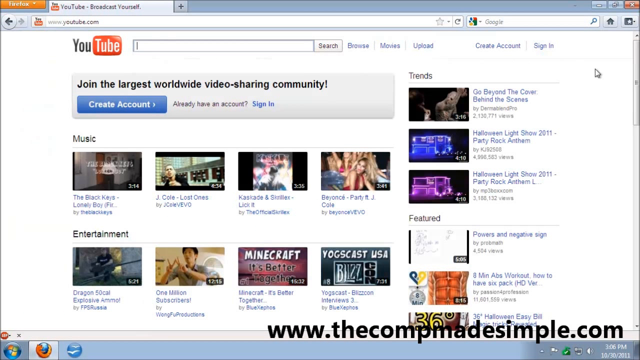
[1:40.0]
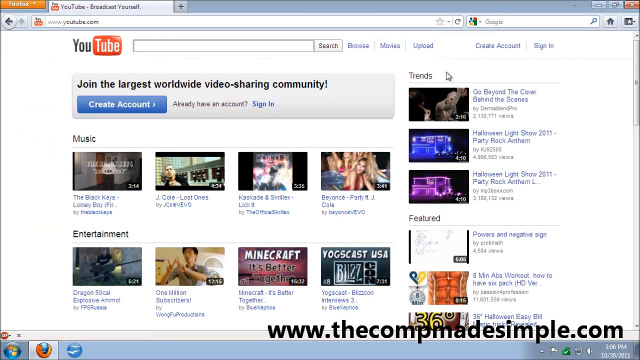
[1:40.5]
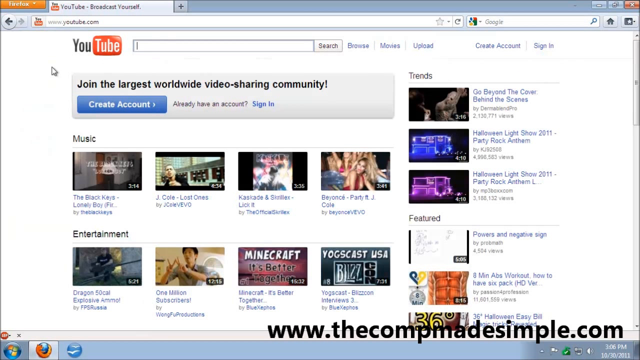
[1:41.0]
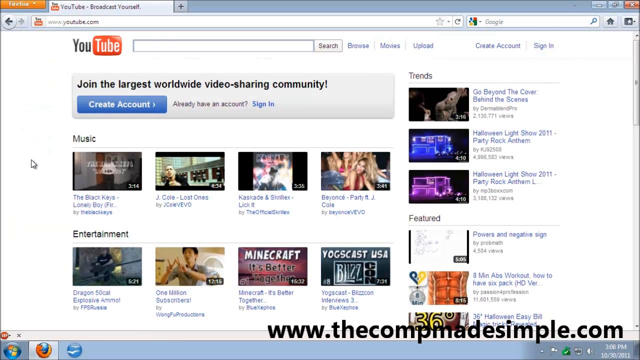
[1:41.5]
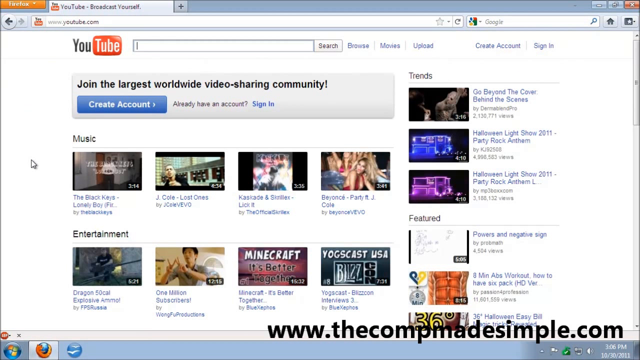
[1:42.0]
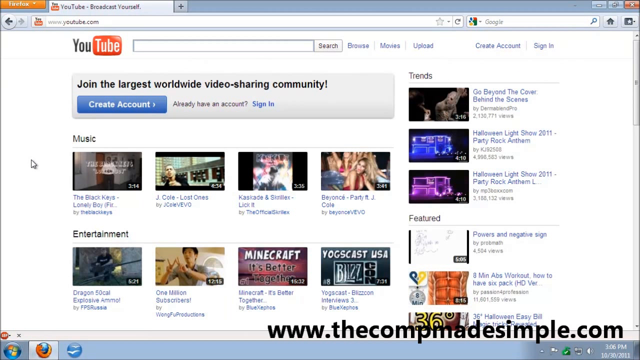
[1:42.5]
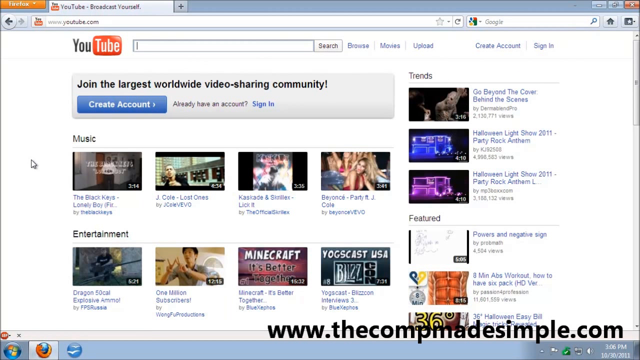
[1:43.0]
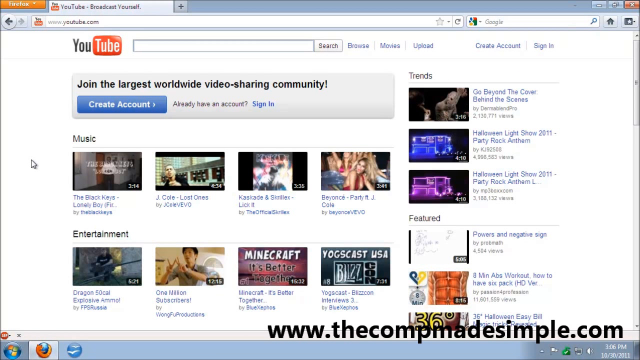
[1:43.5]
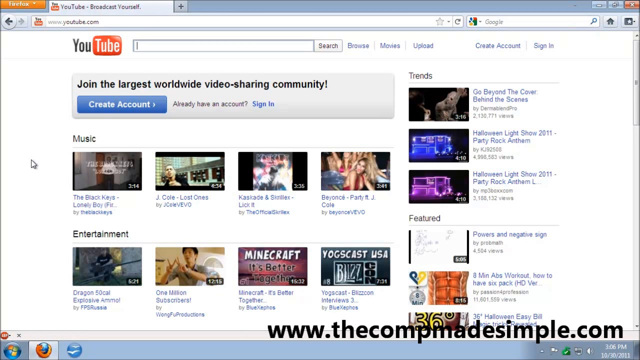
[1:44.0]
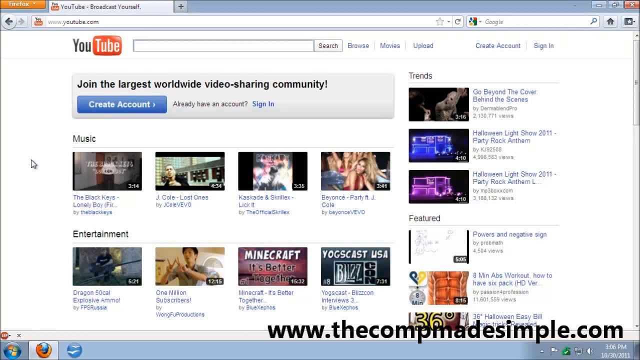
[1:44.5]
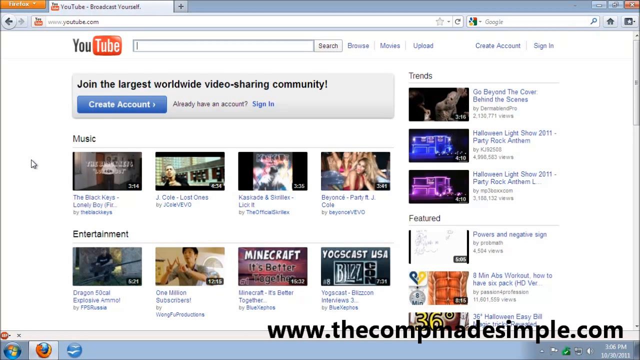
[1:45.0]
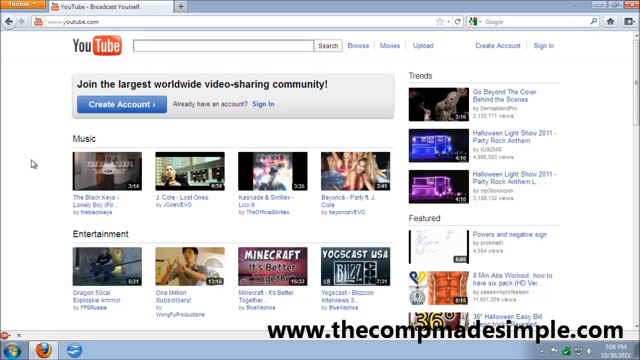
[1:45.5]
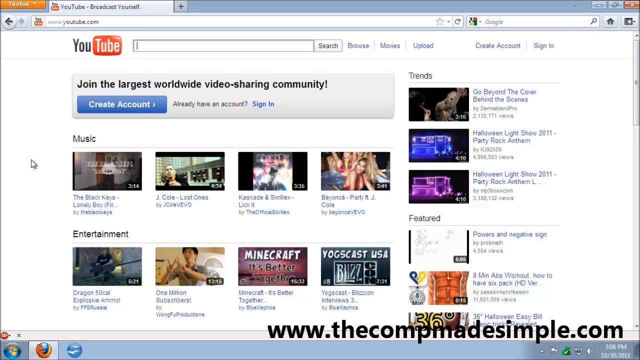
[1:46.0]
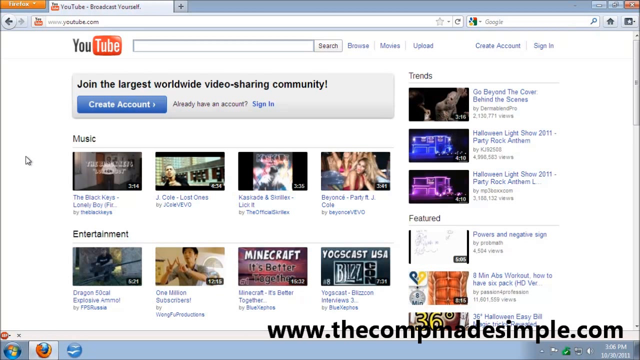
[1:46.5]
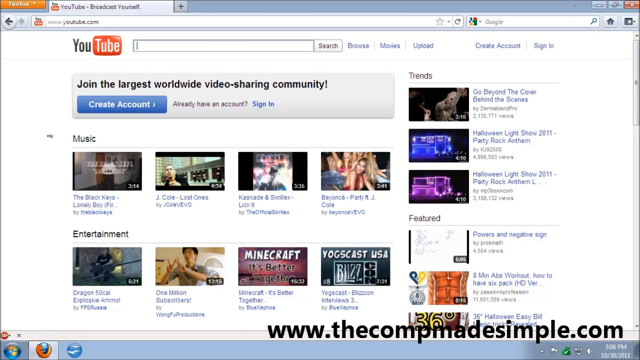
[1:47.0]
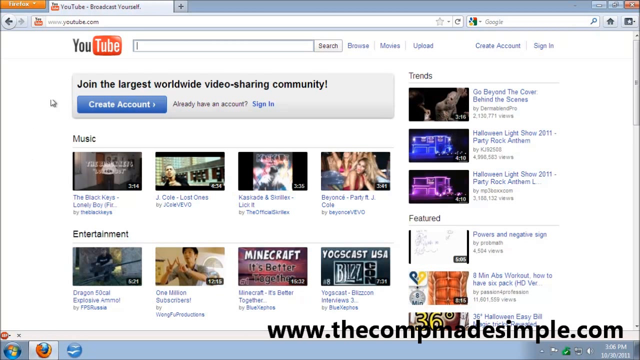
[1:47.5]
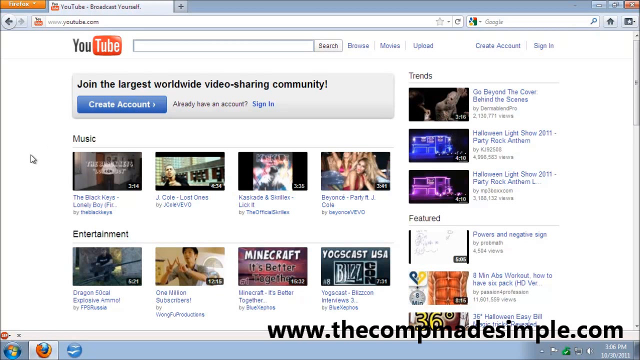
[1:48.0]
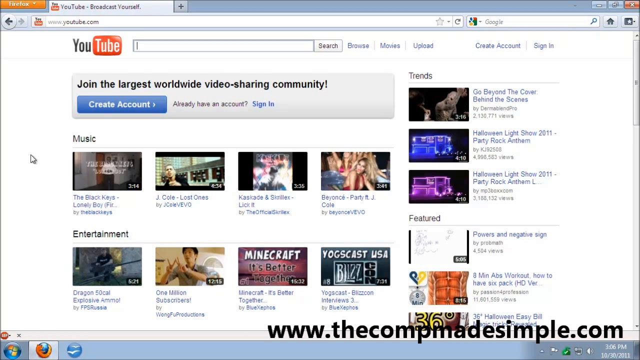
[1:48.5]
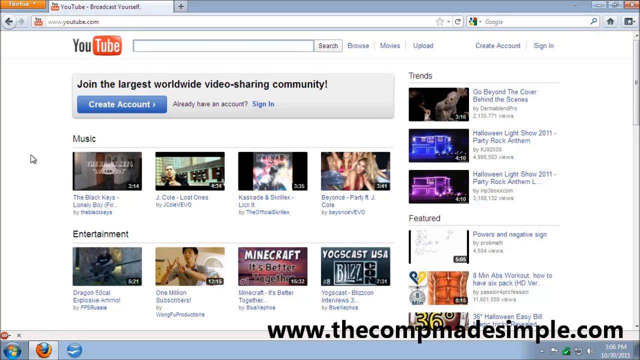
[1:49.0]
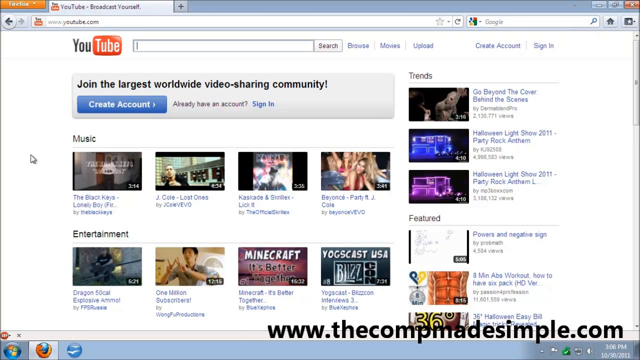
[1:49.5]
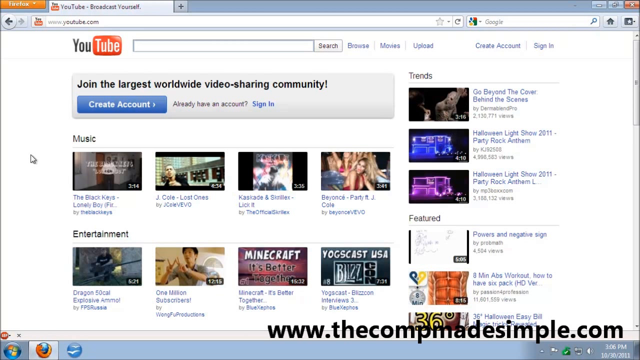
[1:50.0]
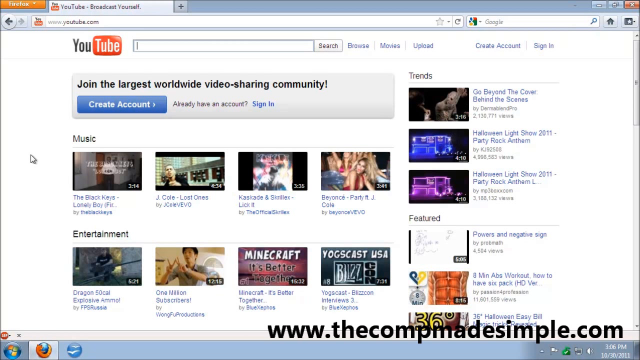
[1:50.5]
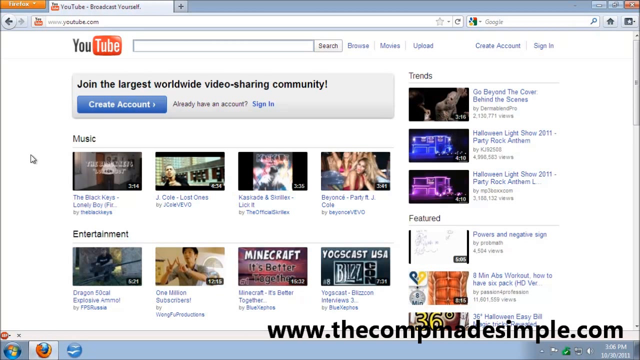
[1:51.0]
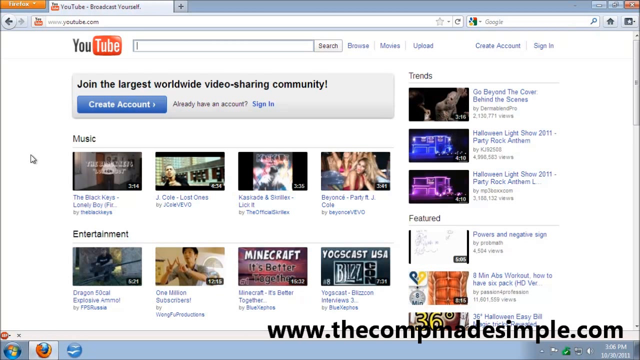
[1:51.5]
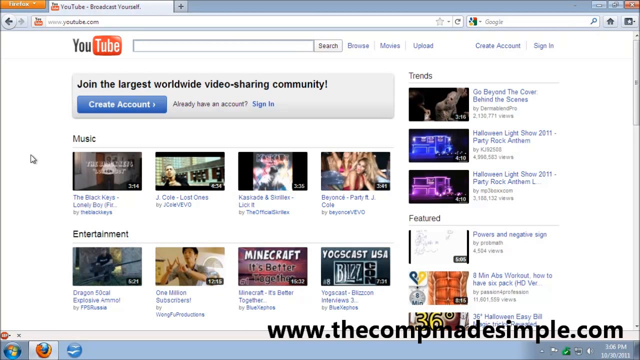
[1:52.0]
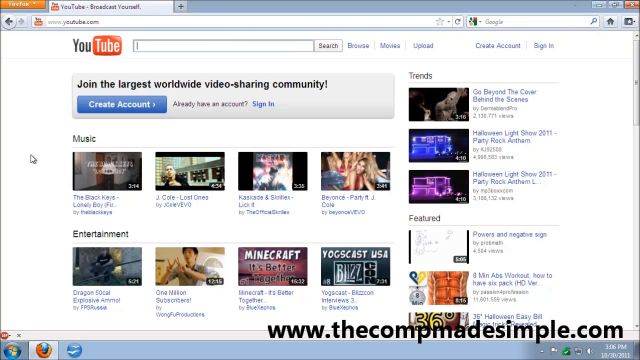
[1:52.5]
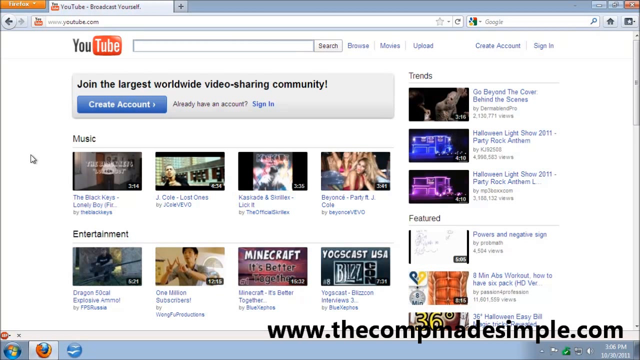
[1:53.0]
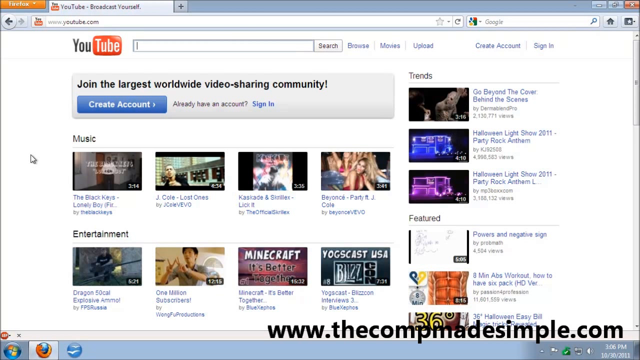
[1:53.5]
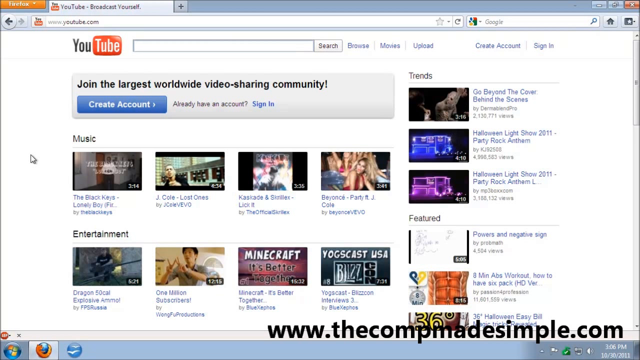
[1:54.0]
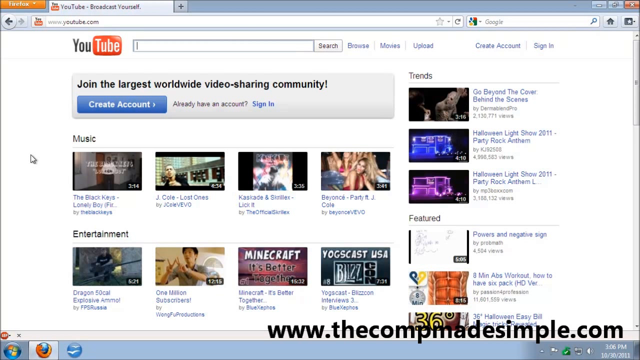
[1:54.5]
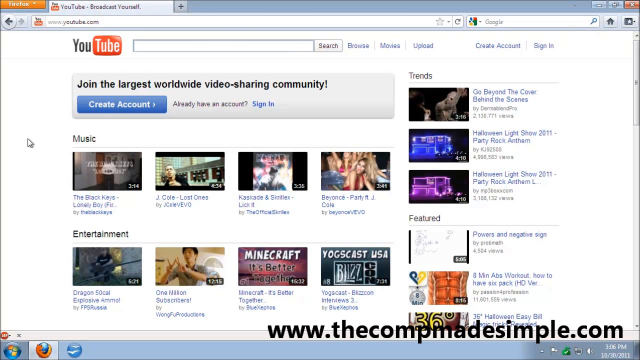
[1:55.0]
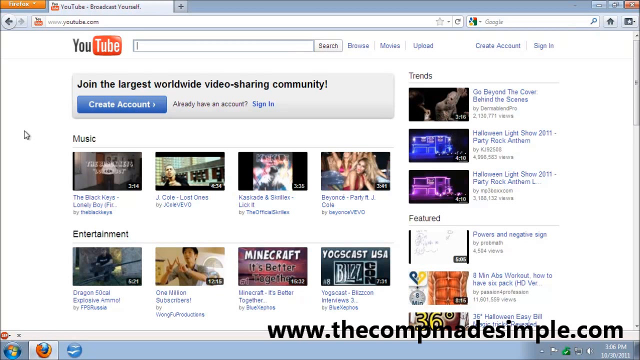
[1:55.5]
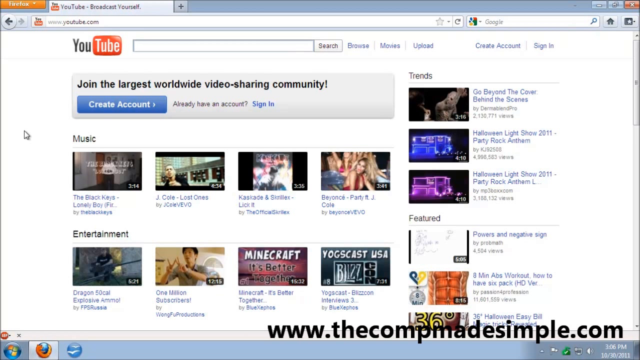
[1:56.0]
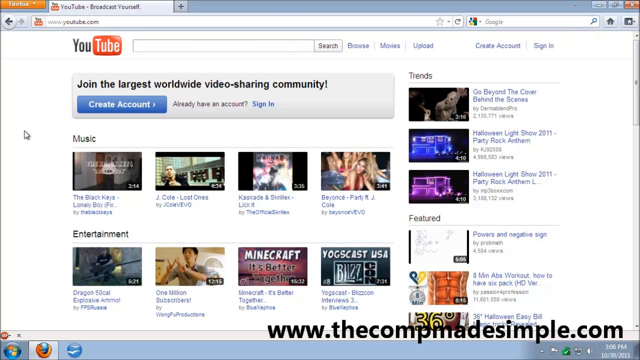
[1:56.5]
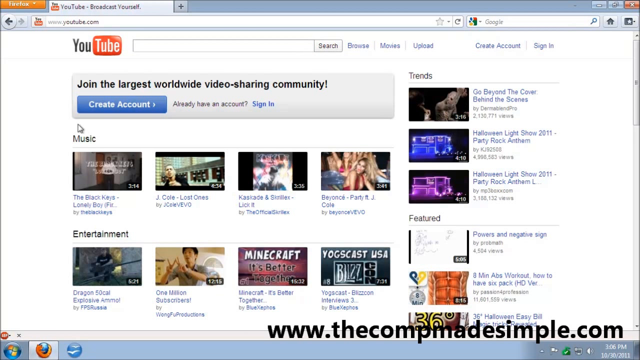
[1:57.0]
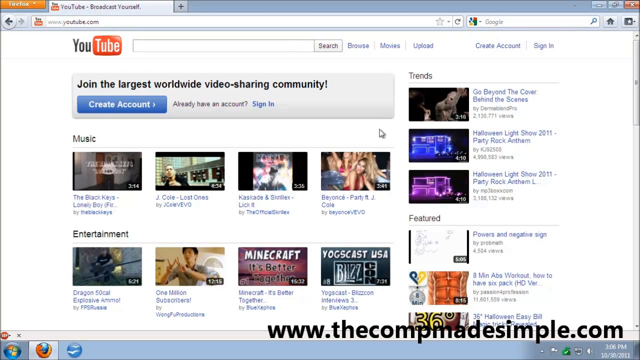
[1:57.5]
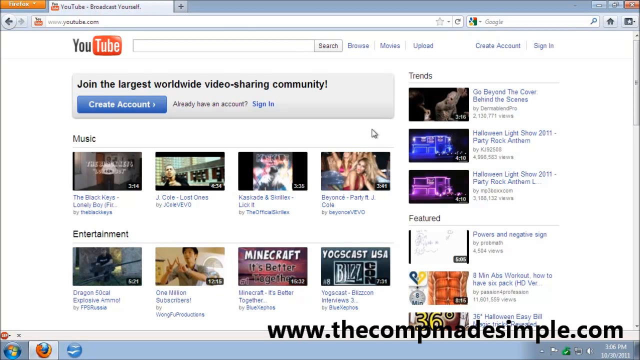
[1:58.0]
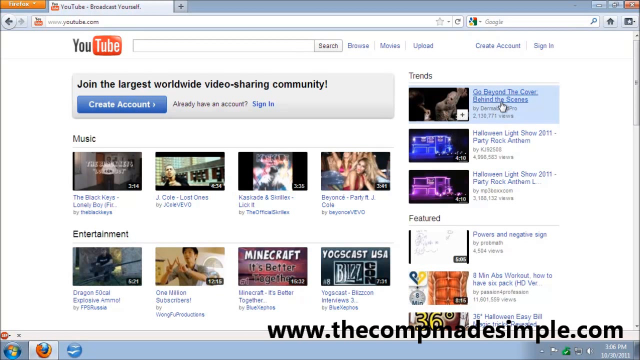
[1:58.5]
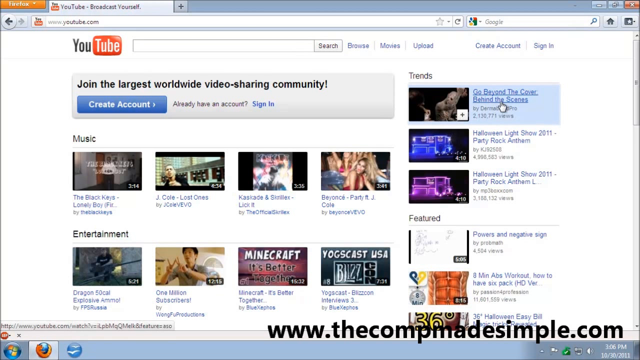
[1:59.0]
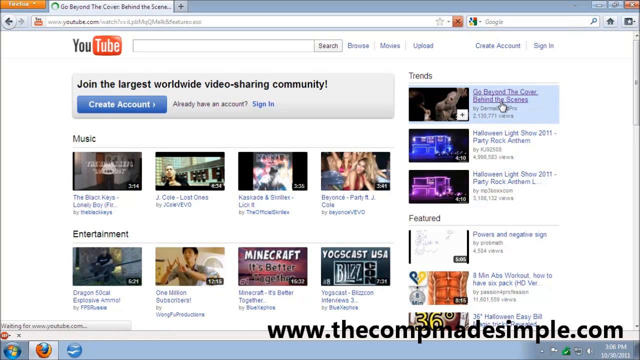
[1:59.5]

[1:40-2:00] The YouTube.com homepage is shown with the user not signed in, so it displays generic video suggestions. A button to sign in or create an account is in the middle of the page, and the search box at the top of the screen has a cursor blinking in it. The user moves the mouse pointer around on the left side of the screen, kind of in circles, without clicking anything. The pointer then moves to the top right side of the page, to the first video under the Trends tab, titled "Go Beyond the Cover Behind the Scenes".